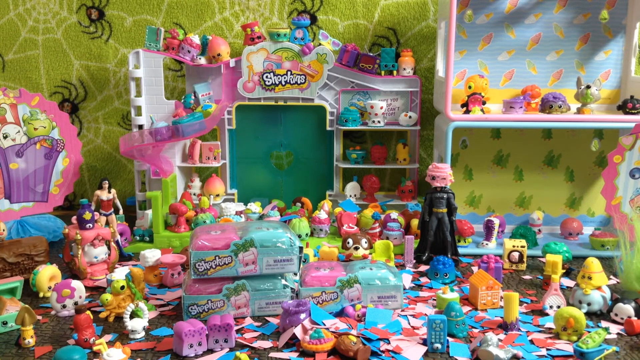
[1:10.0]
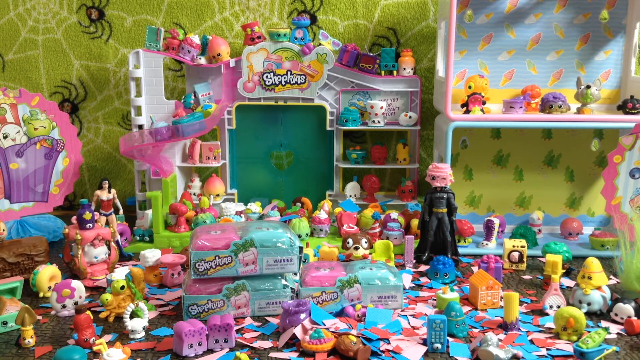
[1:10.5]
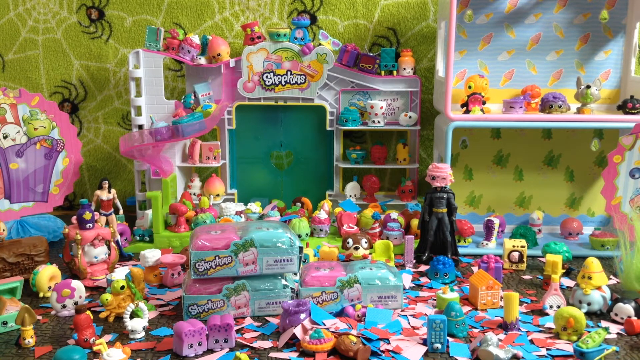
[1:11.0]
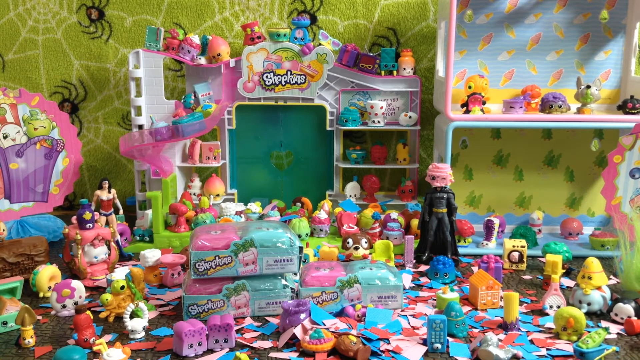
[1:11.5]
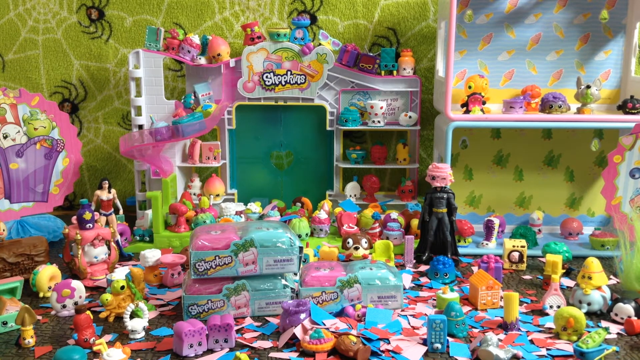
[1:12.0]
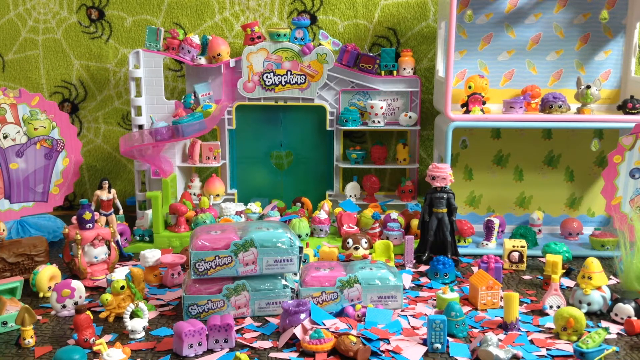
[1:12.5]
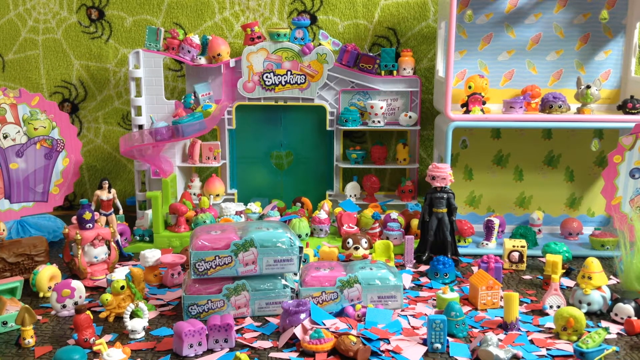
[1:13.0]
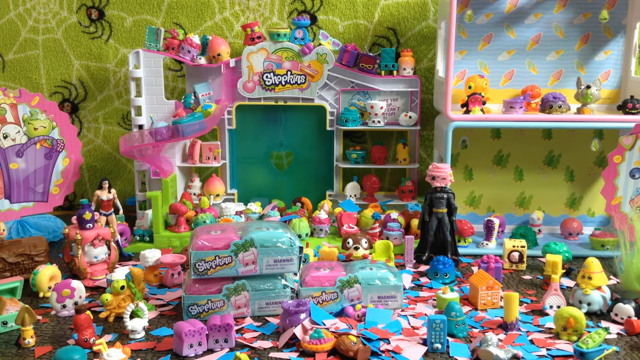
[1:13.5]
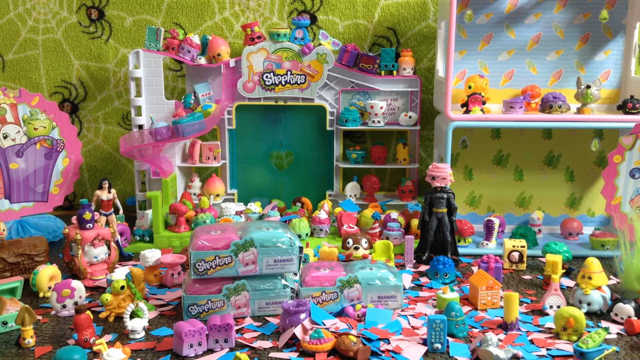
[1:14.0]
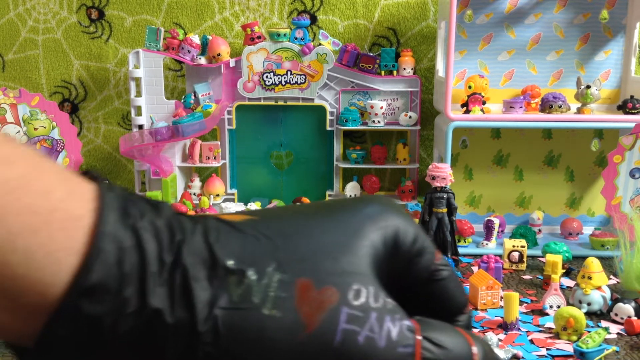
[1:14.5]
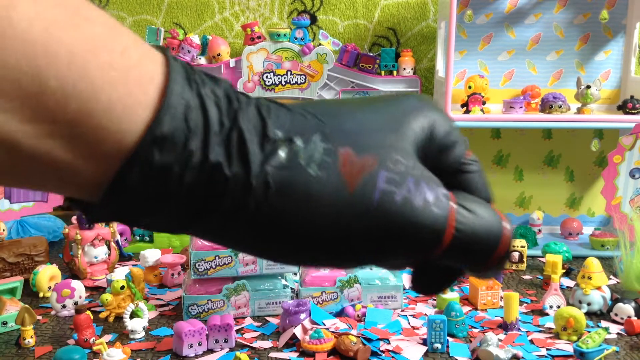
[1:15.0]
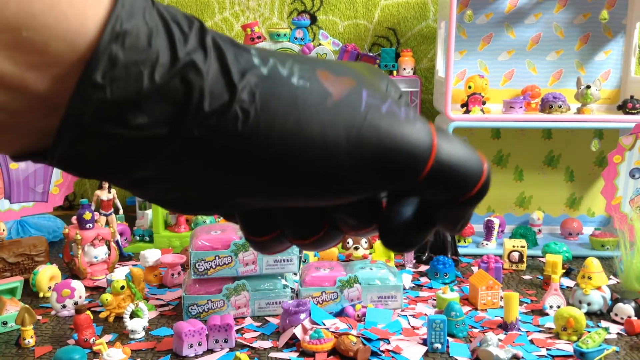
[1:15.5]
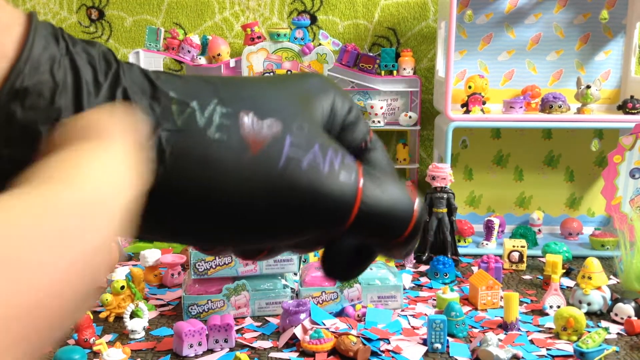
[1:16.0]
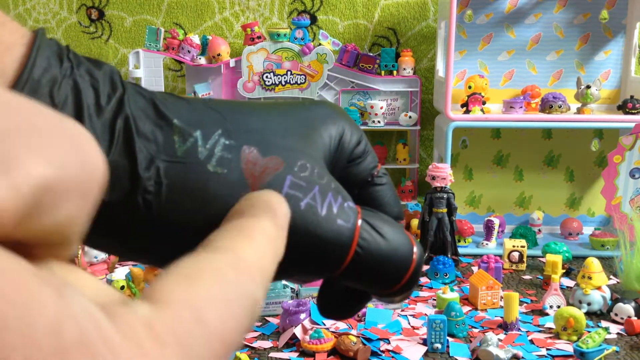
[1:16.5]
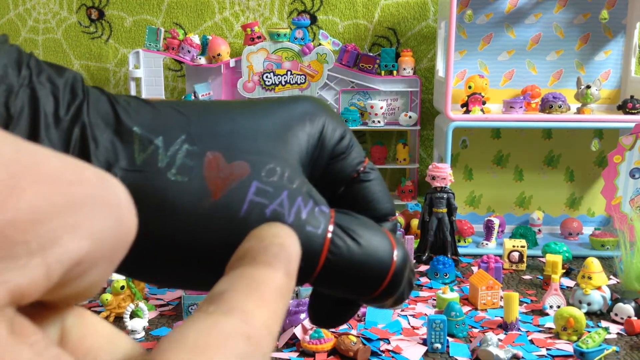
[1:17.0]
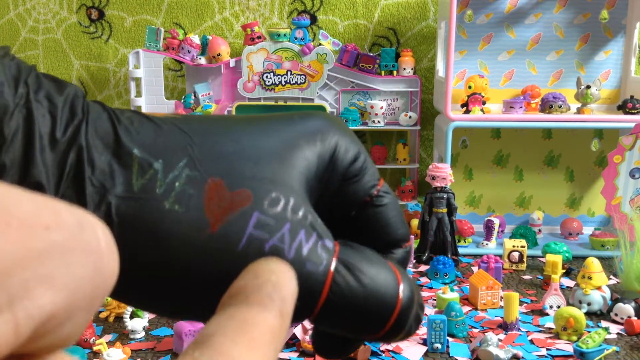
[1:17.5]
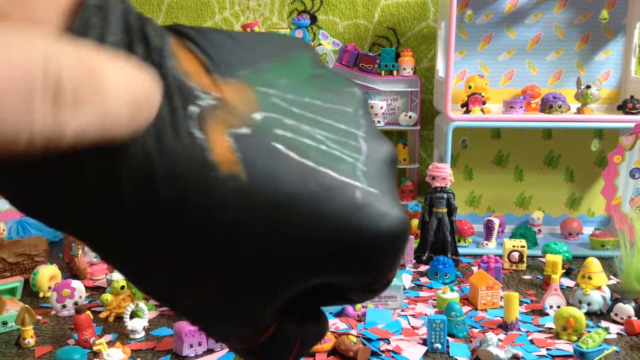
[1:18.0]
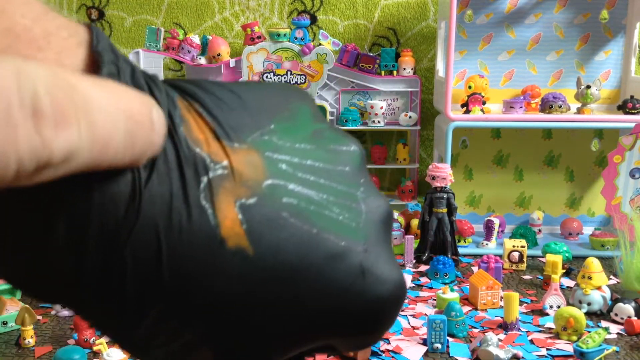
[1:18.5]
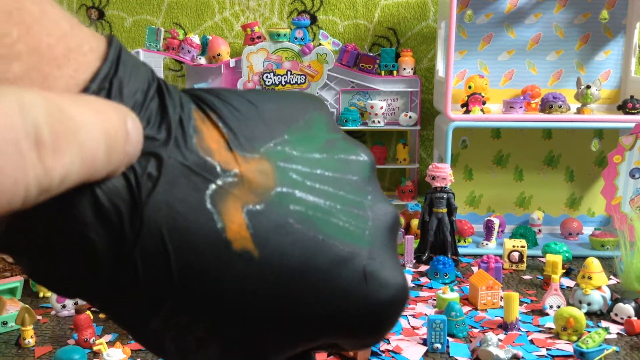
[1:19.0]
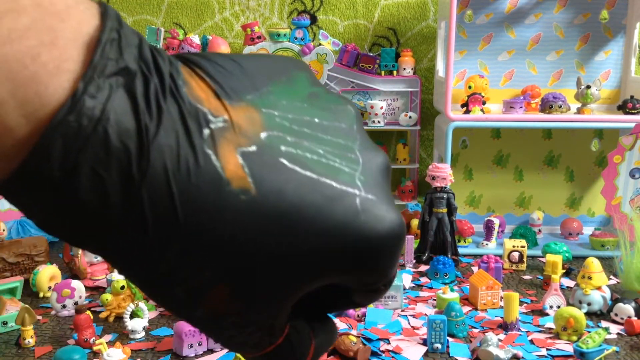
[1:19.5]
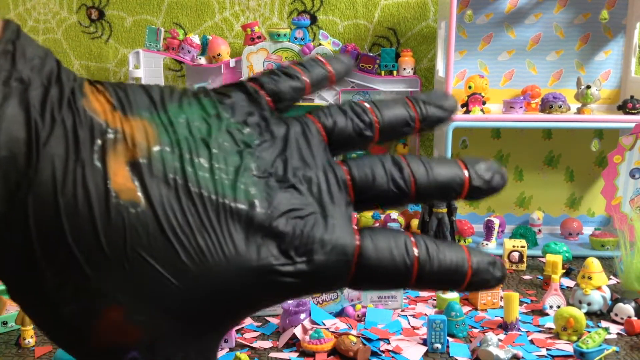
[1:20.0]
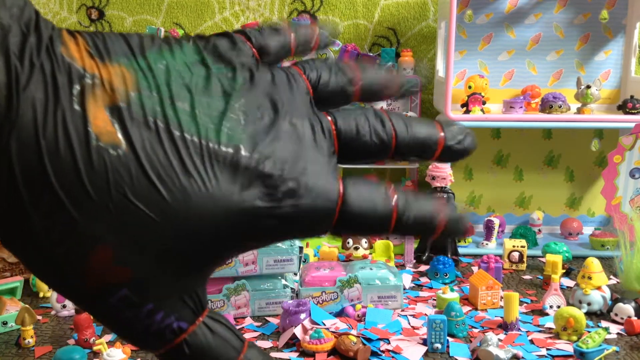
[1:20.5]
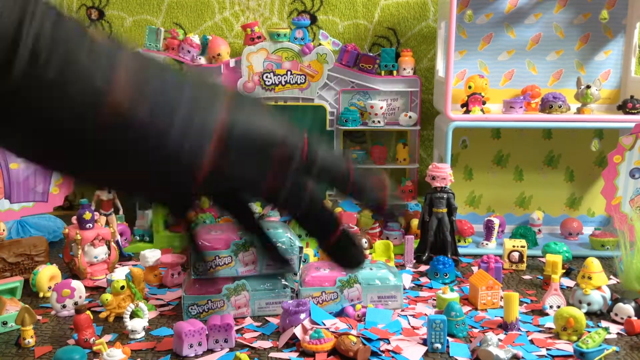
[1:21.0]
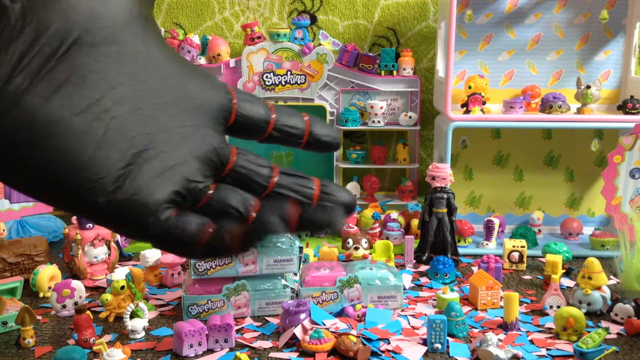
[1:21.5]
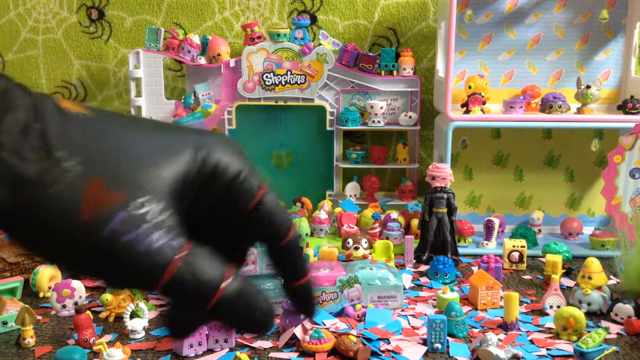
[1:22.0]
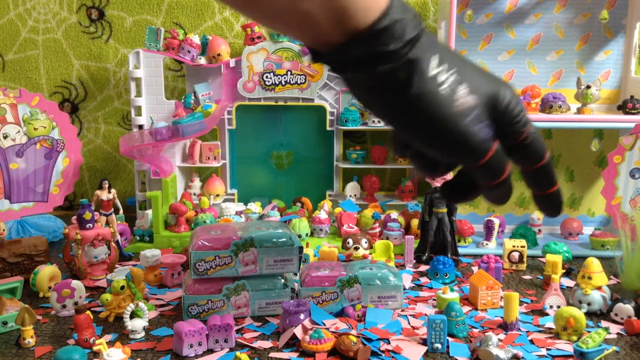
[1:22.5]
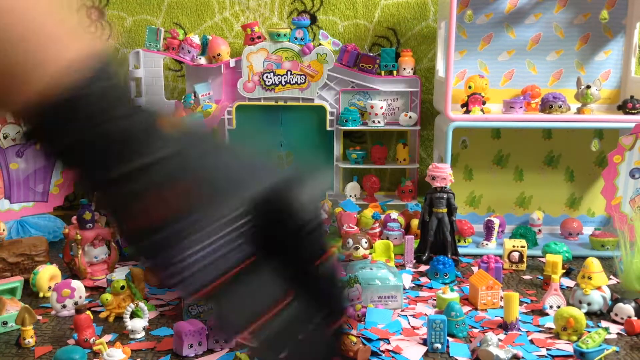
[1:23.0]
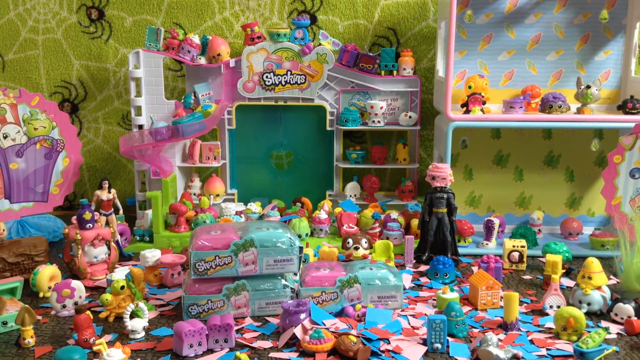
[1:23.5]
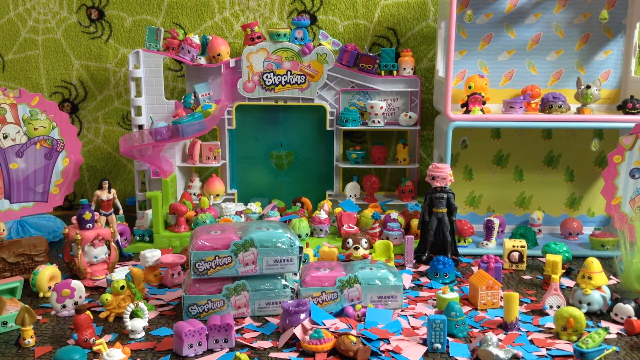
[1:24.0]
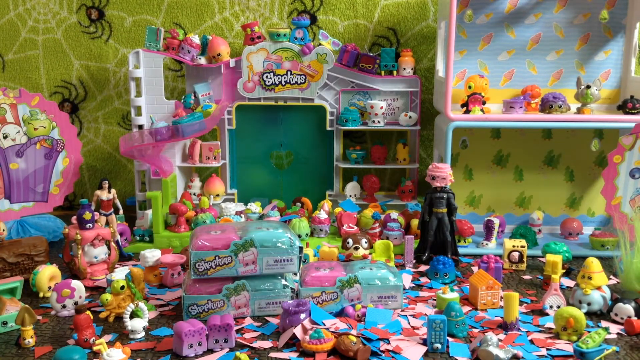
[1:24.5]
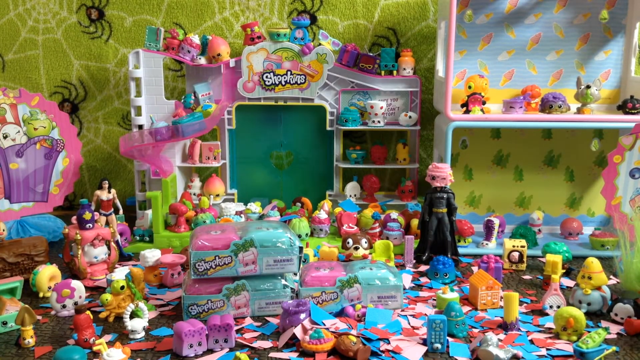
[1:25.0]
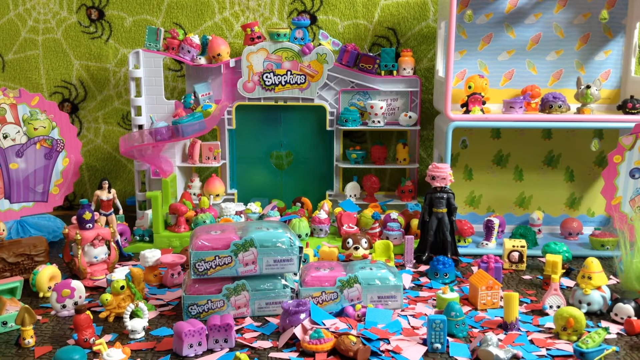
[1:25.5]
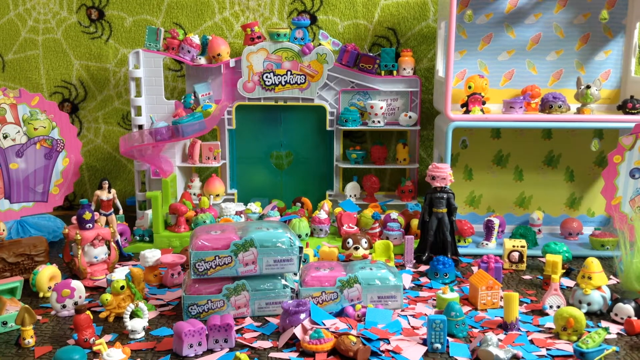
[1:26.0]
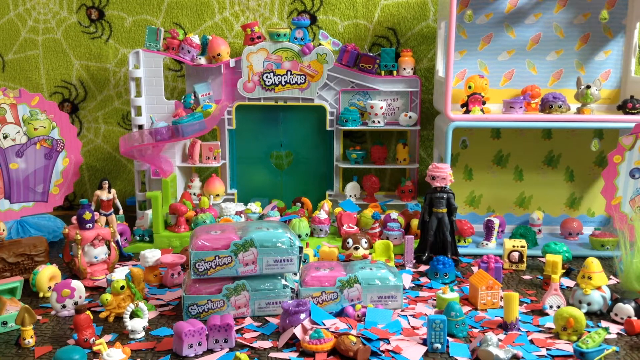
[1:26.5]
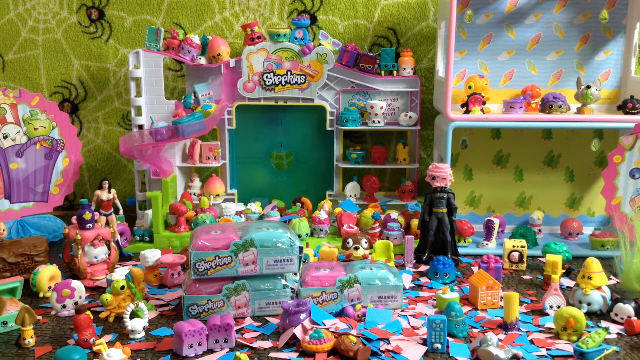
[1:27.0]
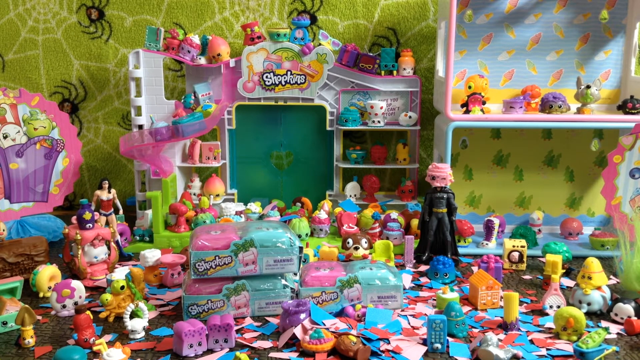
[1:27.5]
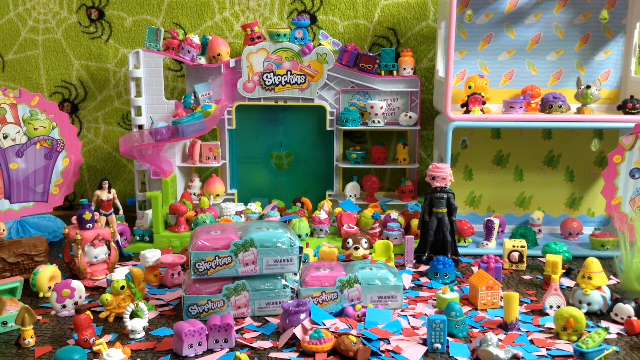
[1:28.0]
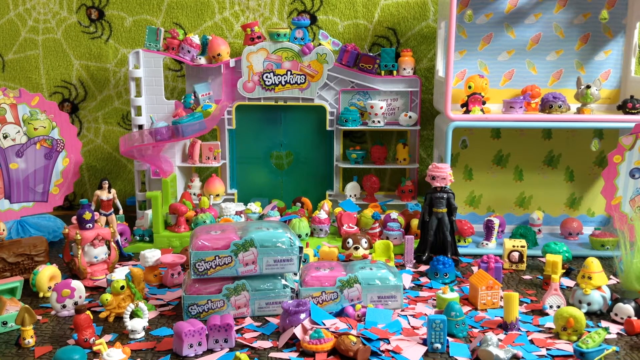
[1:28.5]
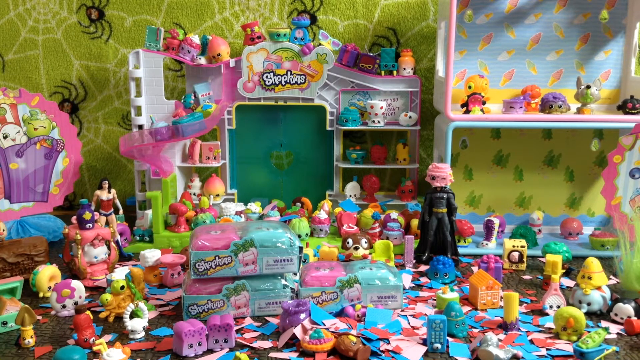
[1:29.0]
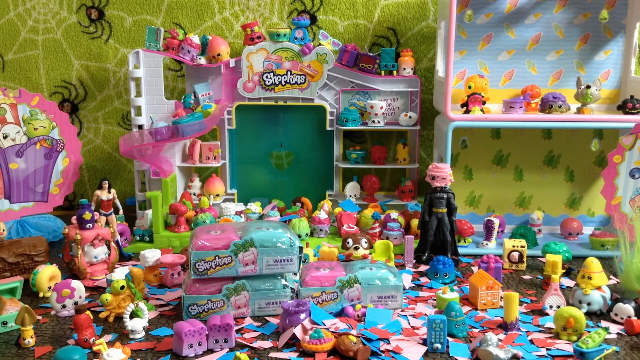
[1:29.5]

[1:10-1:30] The room has very many toys in it: a toy of Batman in a black suit and yellow belt, and another of a lady in a red blouse and blue pants. The wall is green with cobweb drawings in white, some spider drawings, and some dark green patches. The hand of a person wearing black gloves pops up; the glove has "we fans" written on it along with some green and orange drawings. The hand then points at some toys. Below, there is a toy that looks like a duck, a blue duck, and an orange house. Most of the toys are purple, others are pink or blue, and there are many more colors.